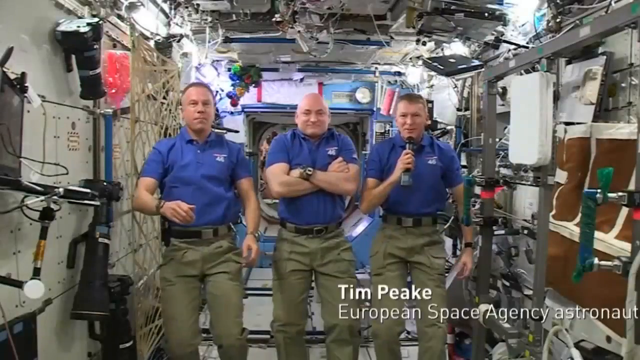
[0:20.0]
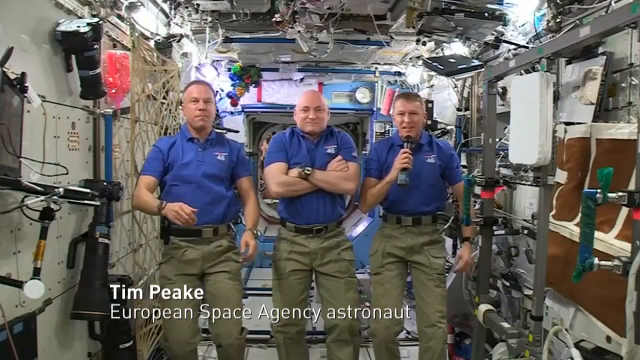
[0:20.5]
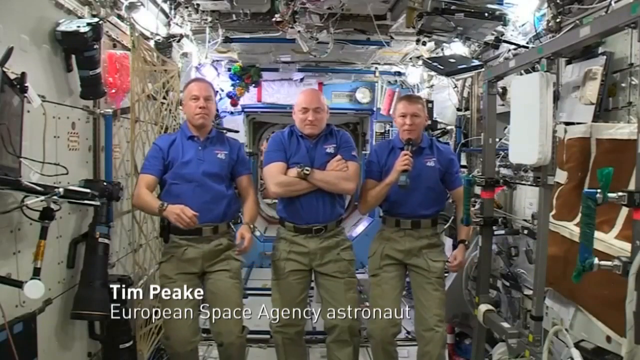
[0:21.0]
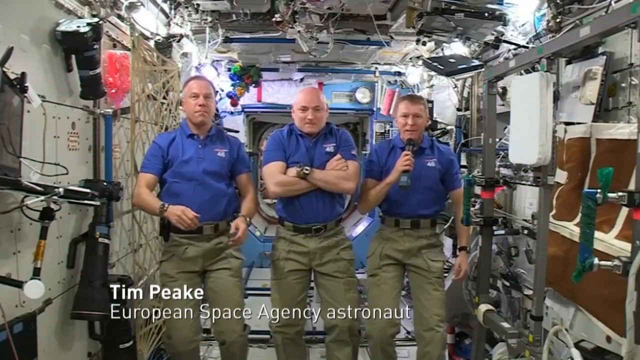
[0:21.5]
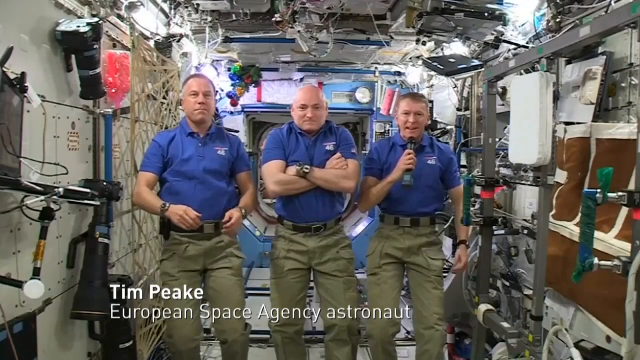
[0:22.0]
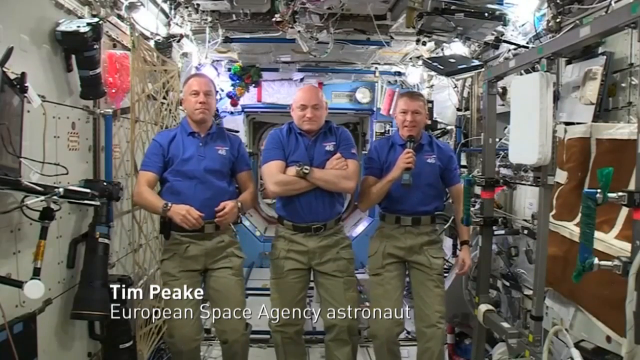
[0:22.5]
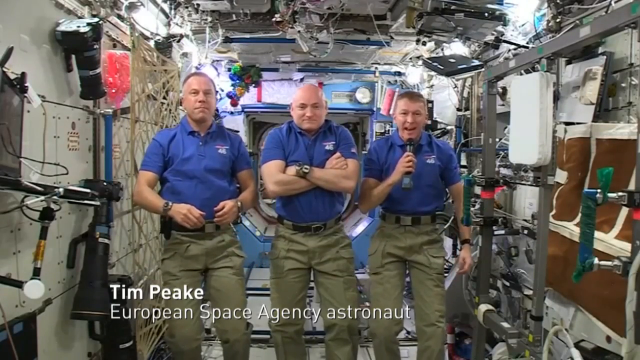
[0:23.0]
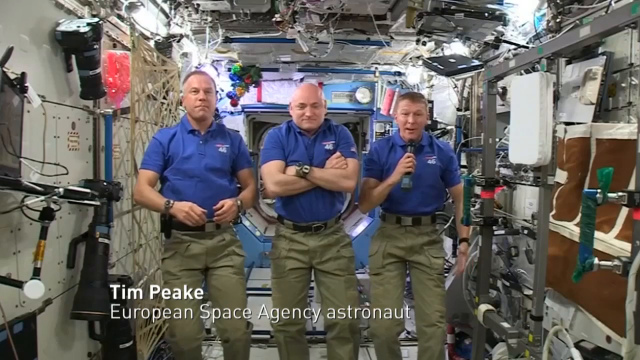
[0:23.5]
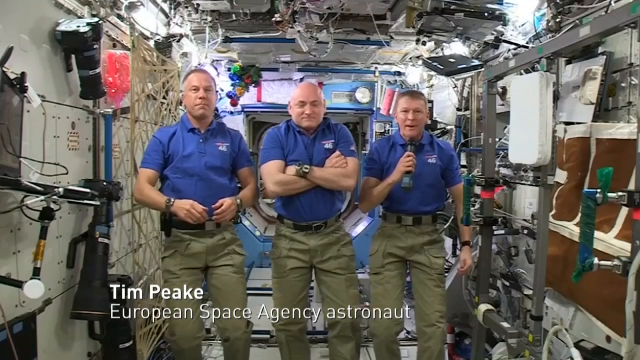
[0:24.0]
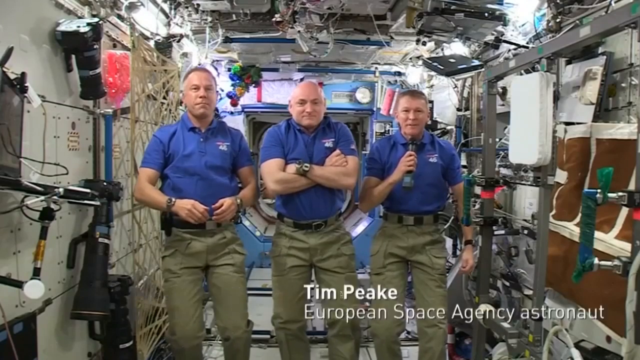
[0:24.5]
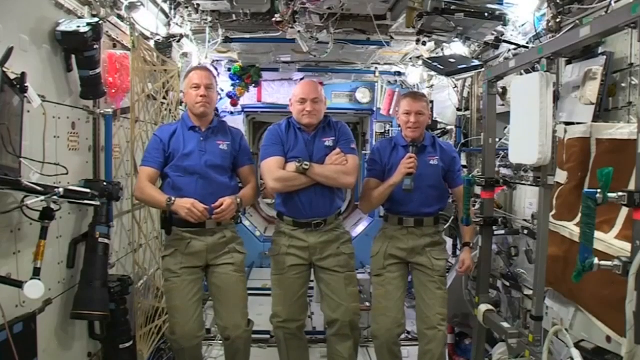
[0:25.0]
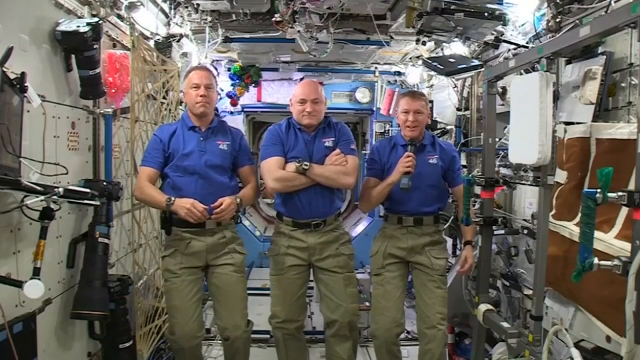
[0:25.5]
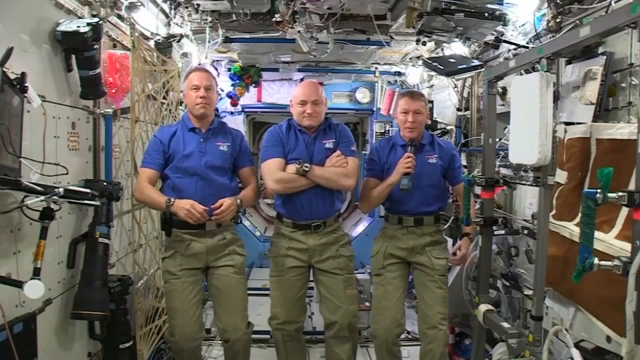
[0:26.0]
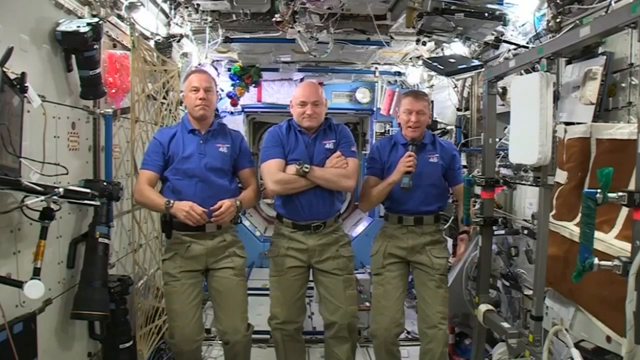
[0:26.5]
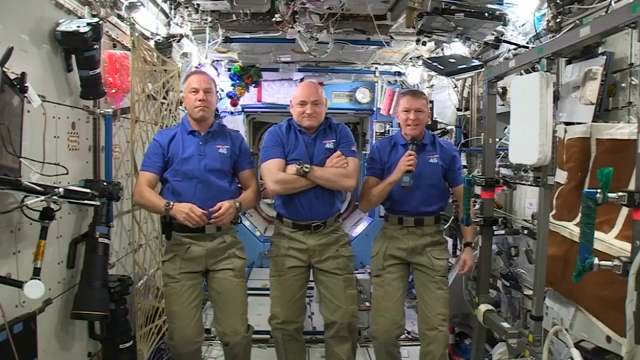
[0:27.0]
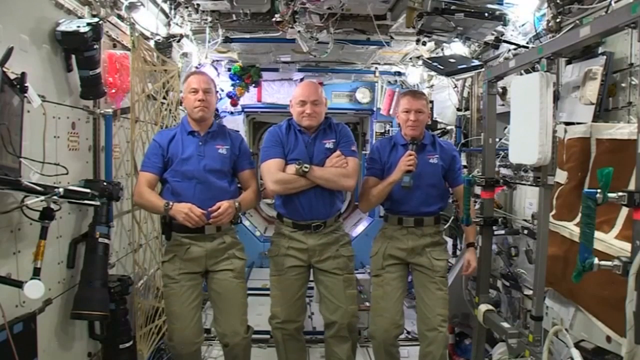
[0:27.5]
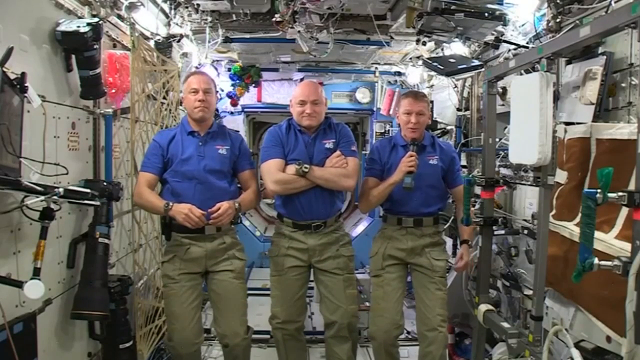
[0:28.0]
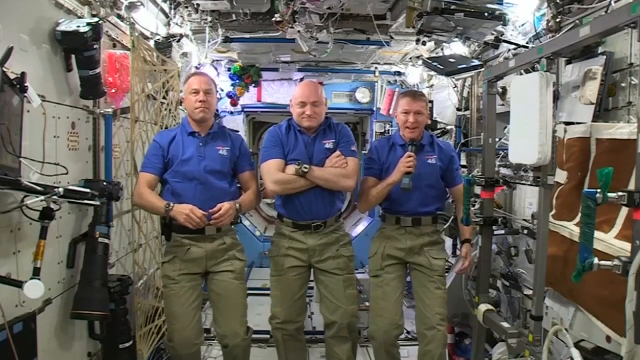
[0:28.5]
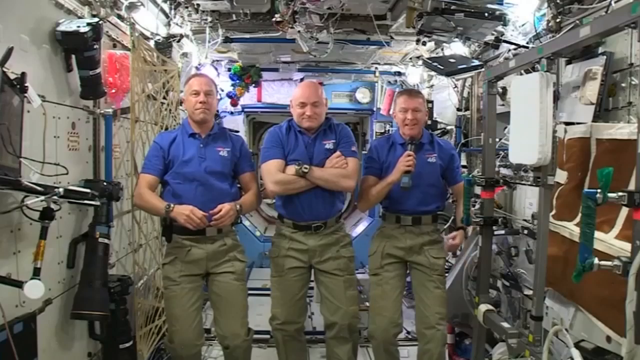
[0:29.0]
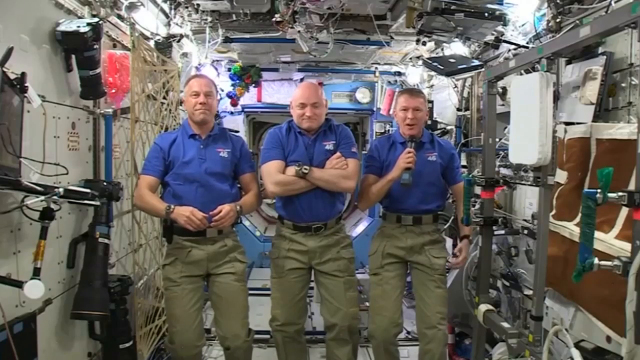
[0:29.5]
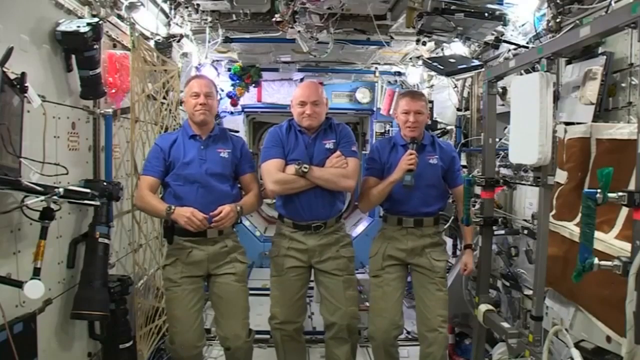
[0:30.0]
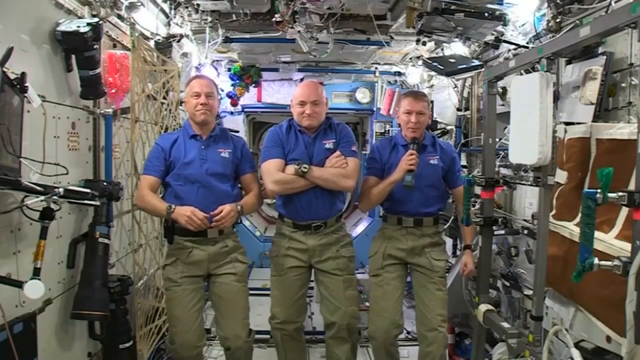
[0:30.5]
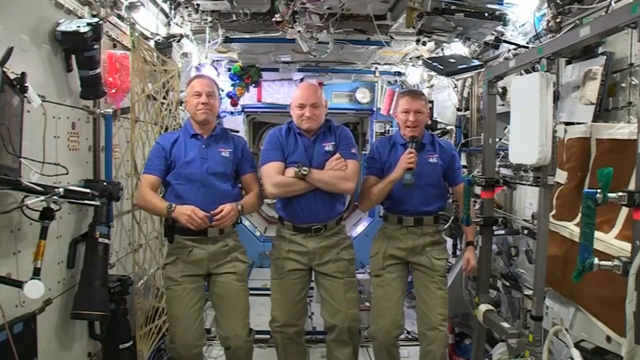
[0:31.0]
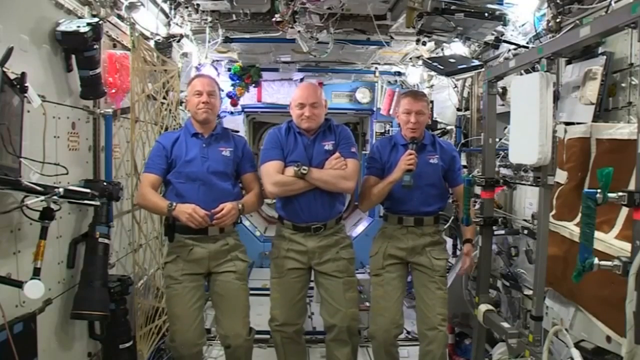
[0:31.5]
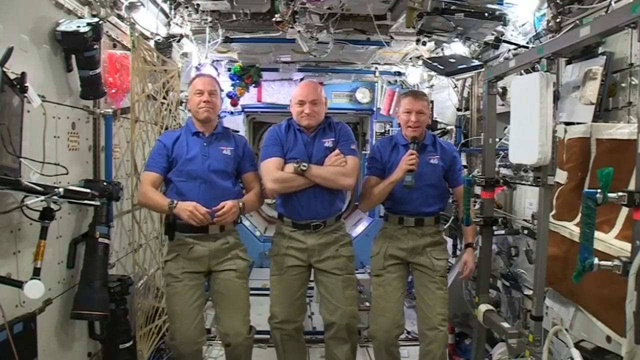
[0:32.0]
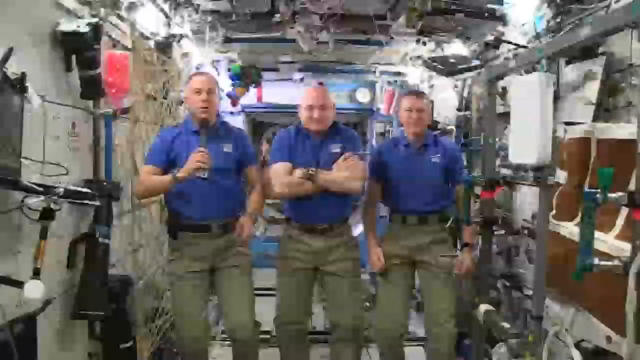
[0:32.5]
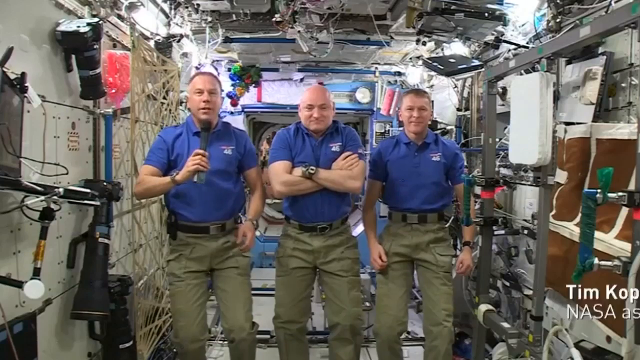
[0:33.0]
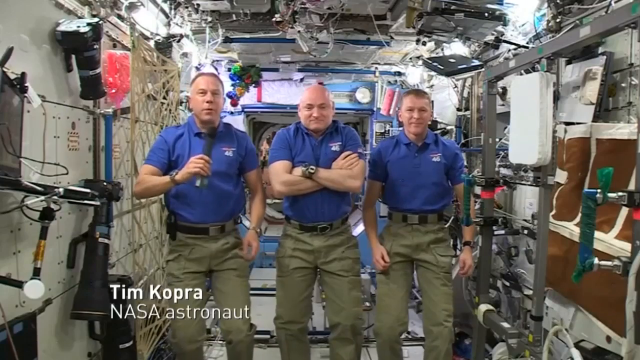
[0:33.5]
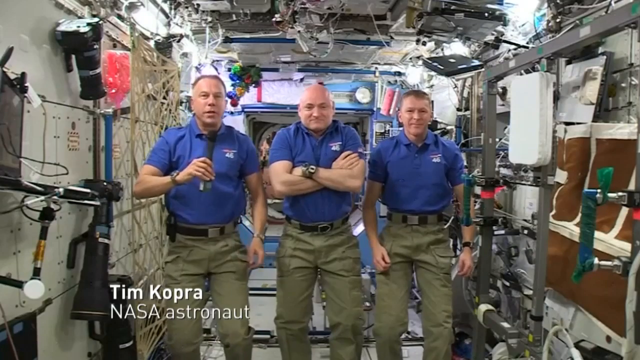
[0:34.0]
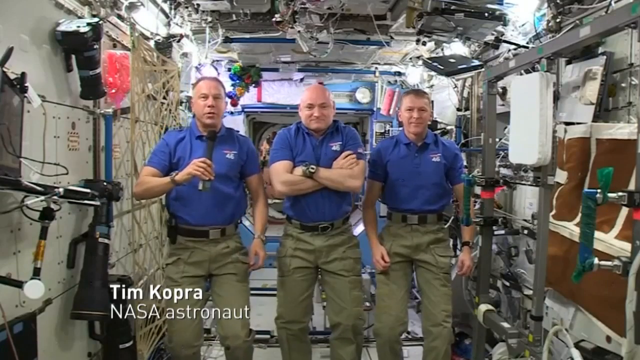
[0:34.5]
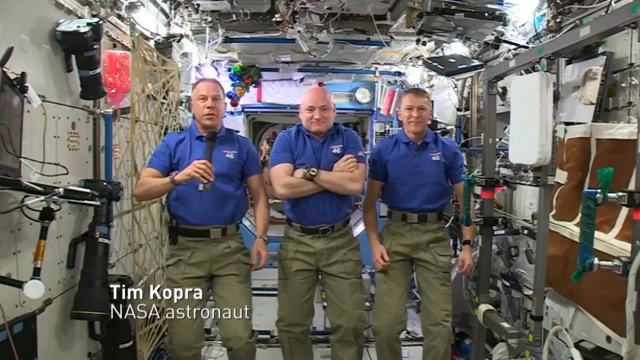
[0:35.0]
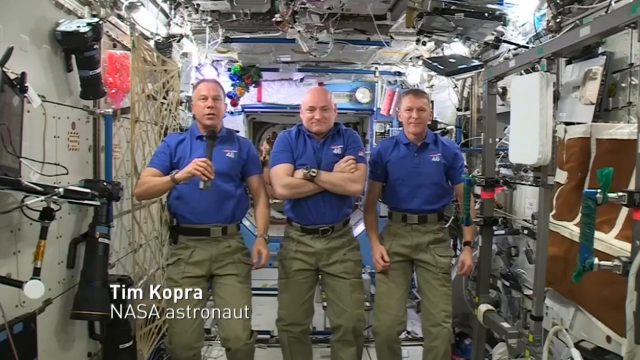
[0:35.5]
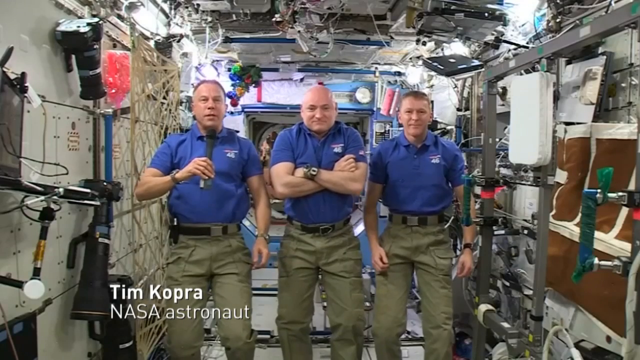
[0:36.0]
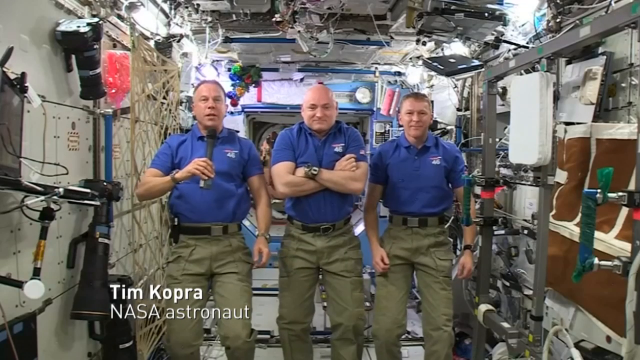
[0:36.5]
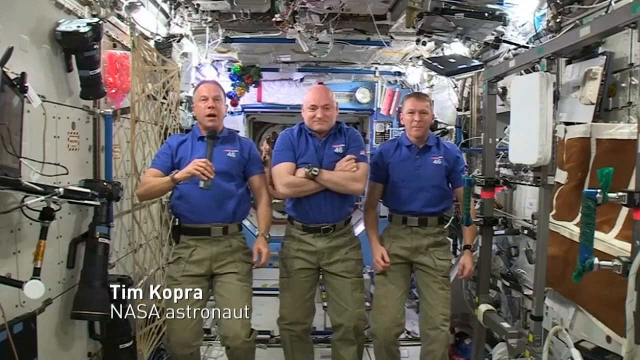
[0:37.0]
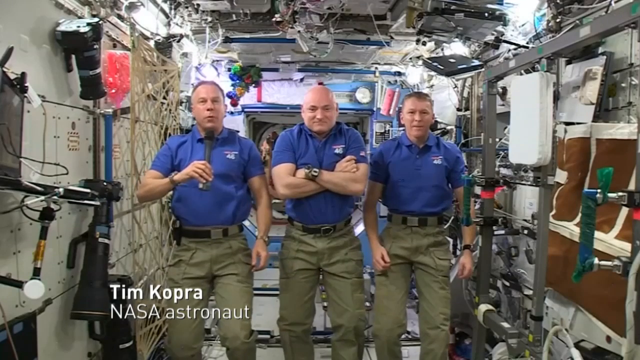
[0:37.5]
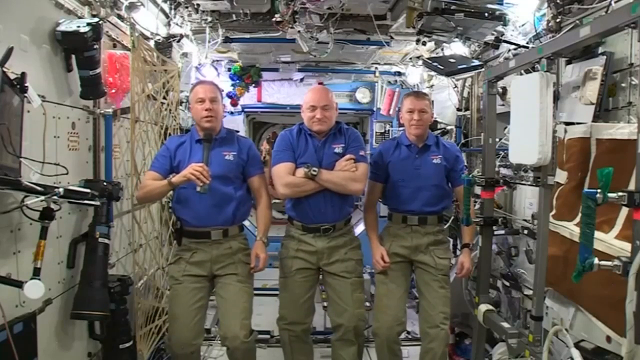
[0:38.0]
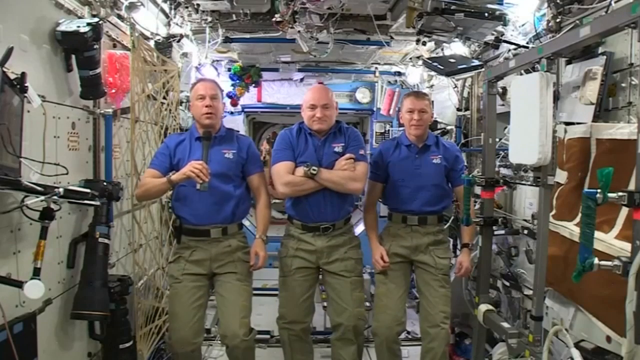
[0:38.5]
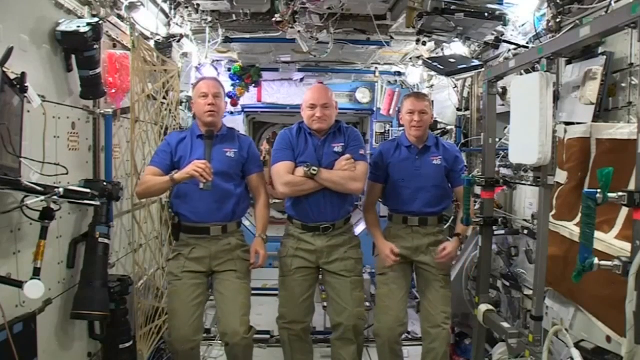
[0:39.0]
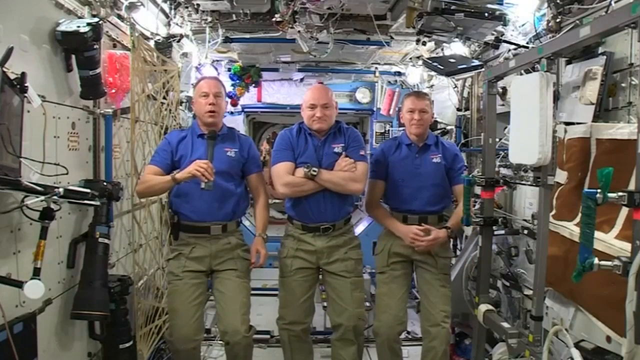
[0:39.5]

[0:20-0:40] The three astronauts are apparently floating in place: three clean-shaven Caucasian men with shaved heads, the one in the middle bald, all wearing blue collared shirts, the same belt and the same khaki pants. The man on the right holds the microphone, and a white caption slides out from the side of the screen beneath him, identifying him as Tim Peake, "European Space Agency astronaut". He speaks into the microphone for a moment, and the caption slides off the right of the screen. He gestures with his left hand while holding the microphone in his right. In a transition, the screen winks out and comes back, and the man on the left is now holding the microphone. A white caption moves in beneath him identifying him as Tim Kopra, "NASA astronaut", with the NASA astronaut label beneath his name. The microphone is black with a shiny gray bottom and a standard padded top. He speaks into it for a few moments while all three drift in place; unlike at the start of the shot, they are now kind of moving up and down a little, floating from the motion of their backflips, which makes it more apparent that they are in zero gravity.